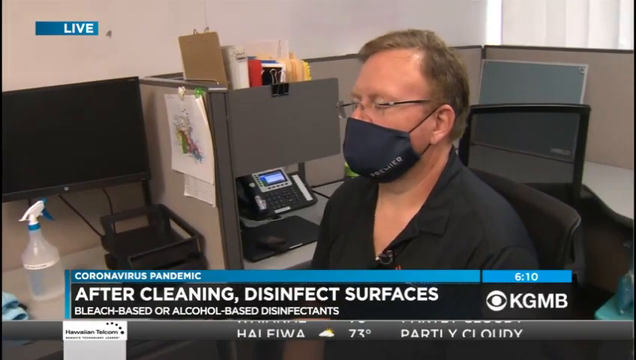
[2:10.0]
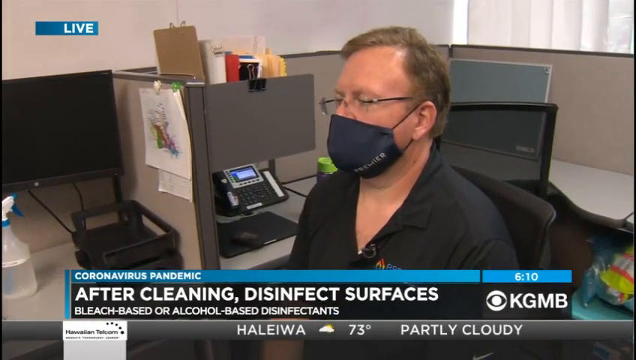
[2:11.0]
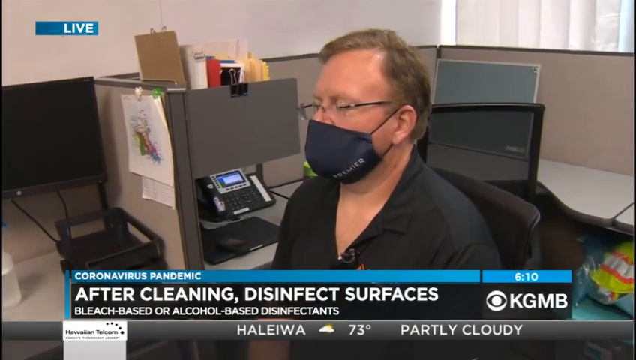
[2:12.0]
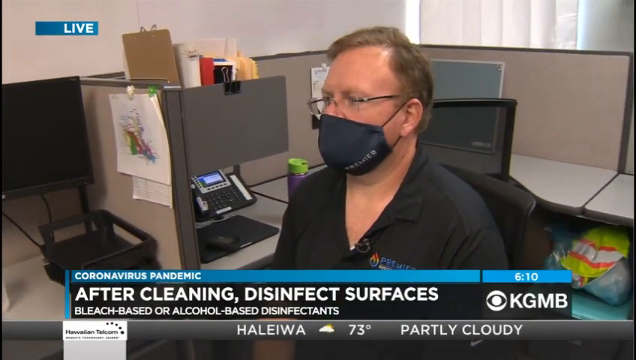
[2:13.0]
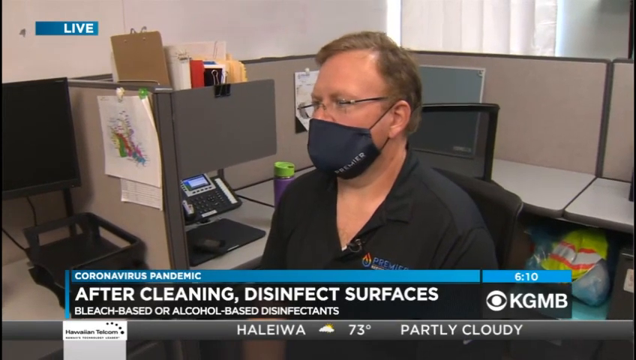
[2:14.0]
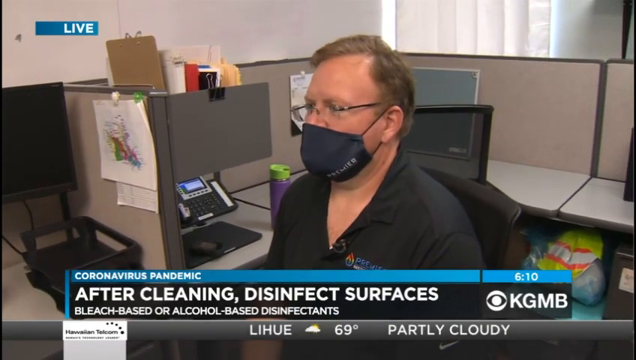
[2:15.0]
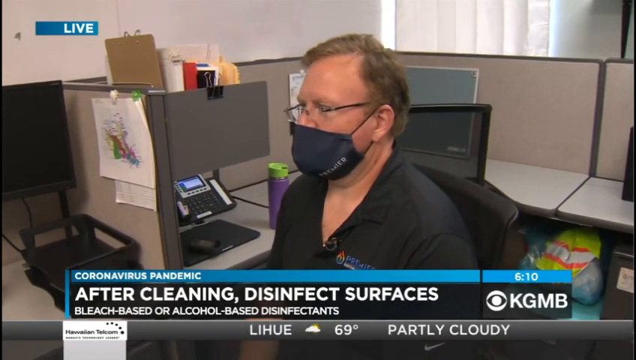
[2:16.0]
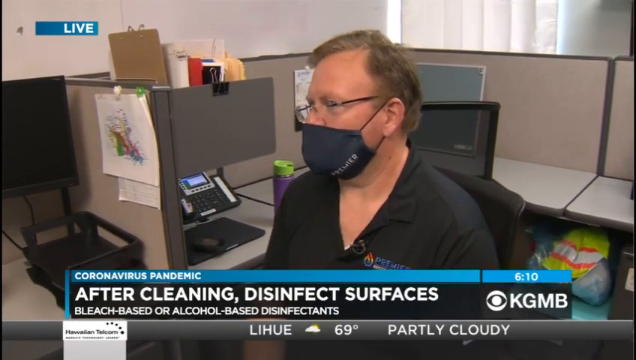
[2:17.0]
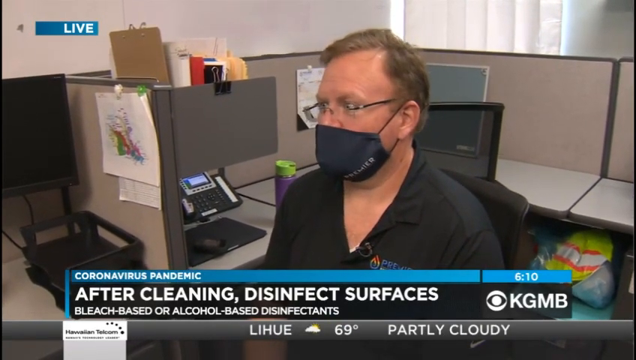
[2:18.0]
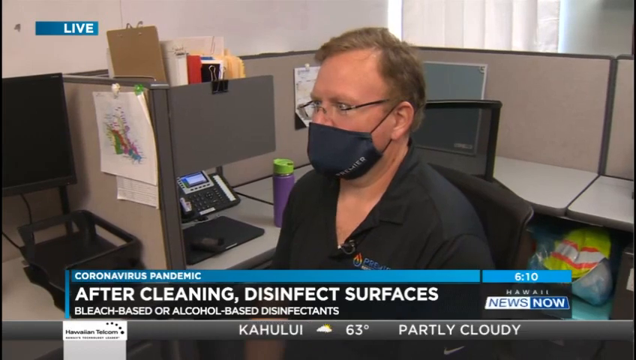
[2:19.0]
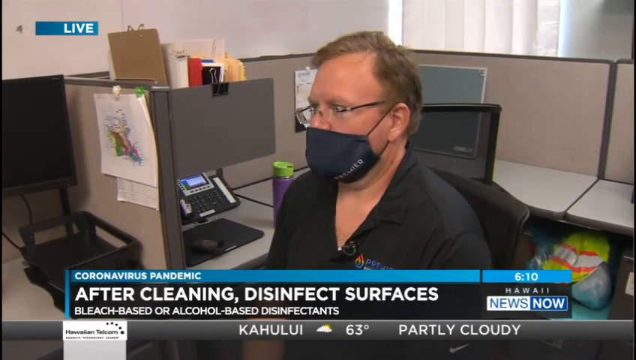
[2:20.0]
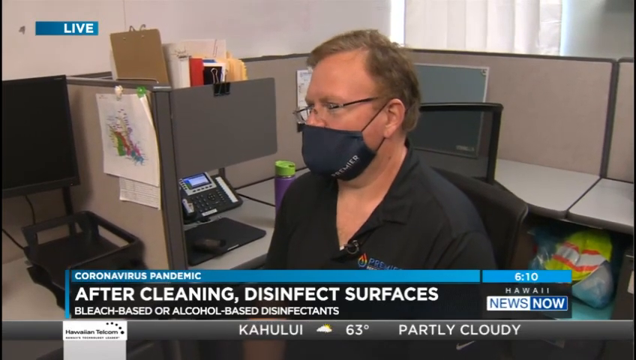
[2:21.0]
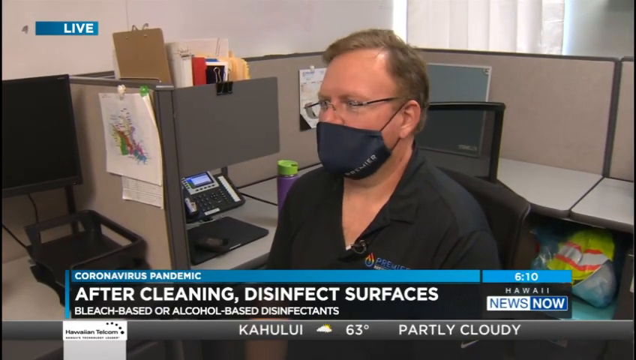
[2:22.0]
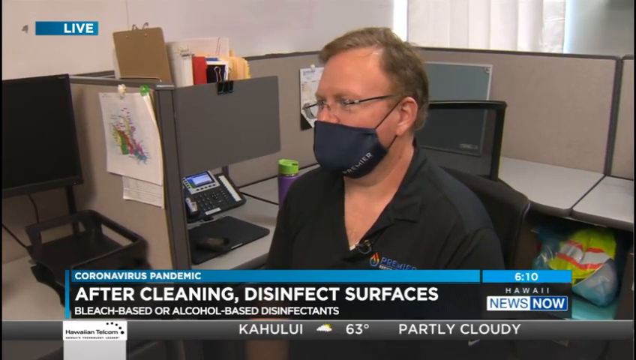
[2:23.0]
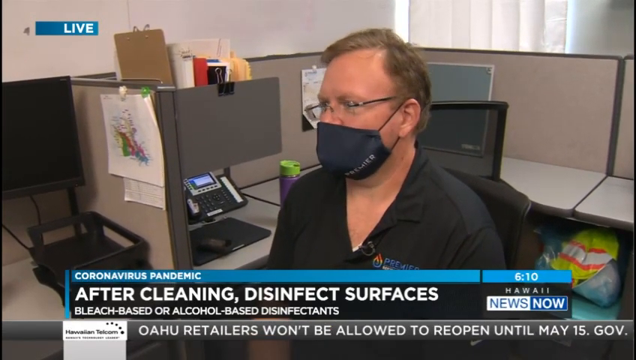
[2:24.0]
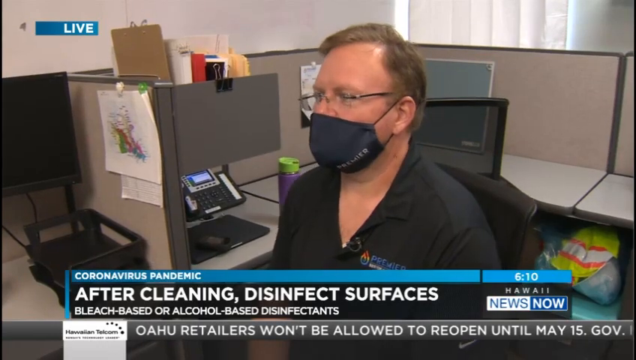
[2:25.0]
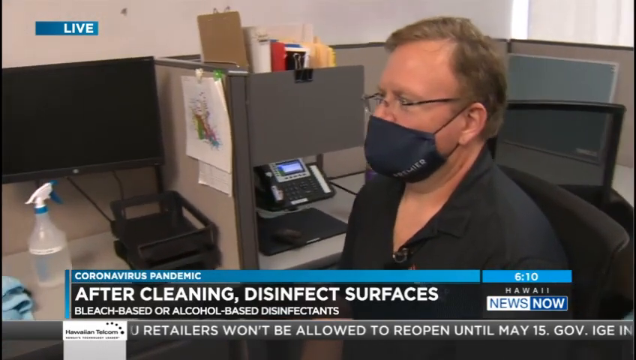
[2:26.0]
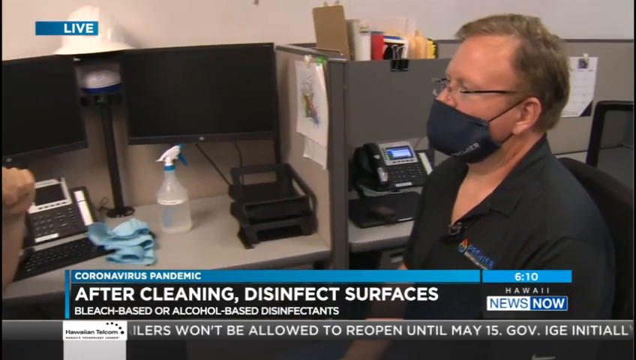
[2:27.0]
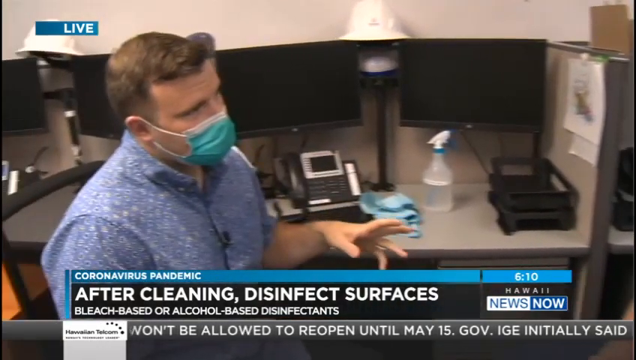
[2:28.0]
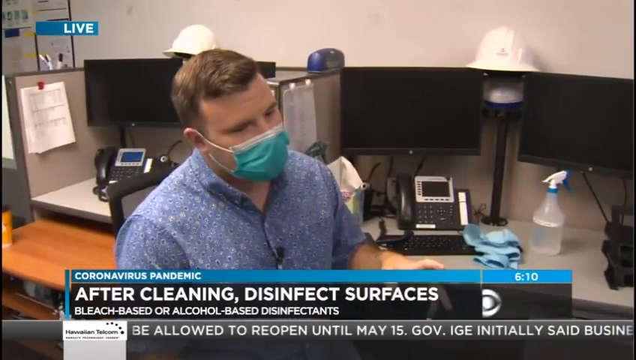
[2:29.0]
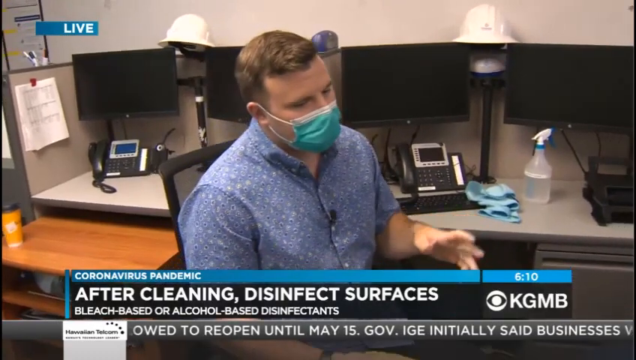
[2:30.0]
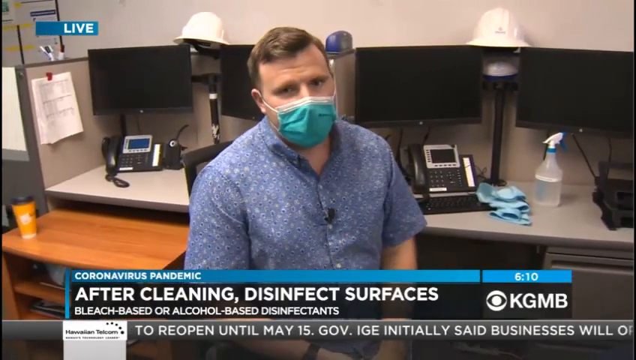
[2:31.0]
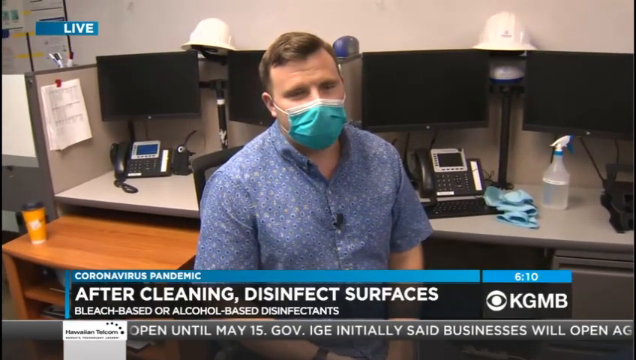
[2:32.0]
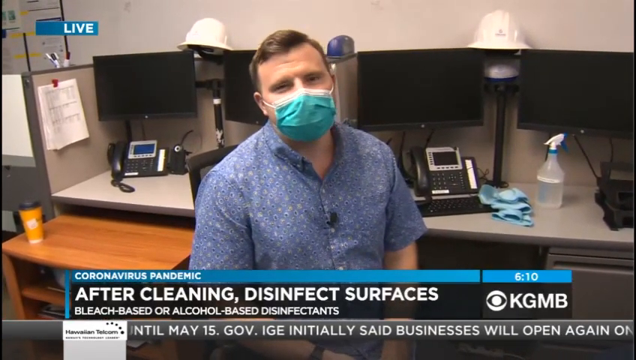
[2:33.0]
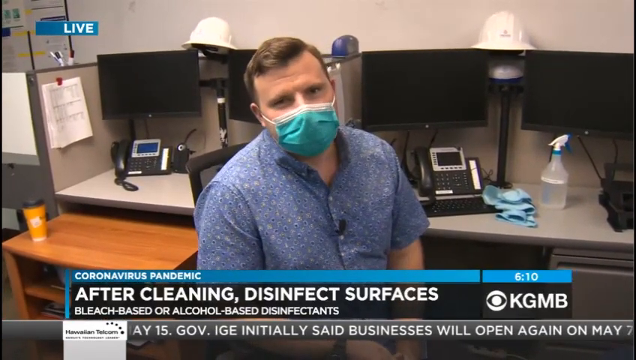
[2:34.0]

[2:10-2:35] The view shows more of the man on the right, who wears a face mask. Behind him are several computer monitors, a telephone, a mouse pad and a green, orange and white vest. He appears to be speaking, though his mouth is not visible because of the mask. The view then shows the man on the left, also wearing a face mask, continuing to speak; behind him are computer monitors and a white safety helmet. News updates along the bottom center read "Oahu retailers won't be allowed to reopen until May 15" and "Gov IGE initially said businesses will open". The video is rectangular.